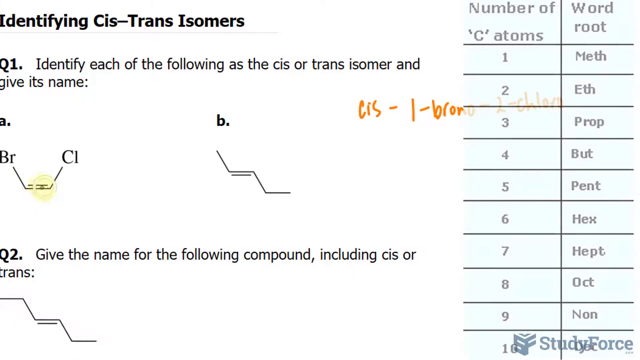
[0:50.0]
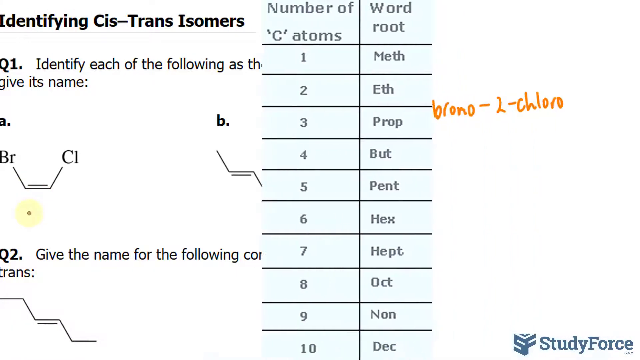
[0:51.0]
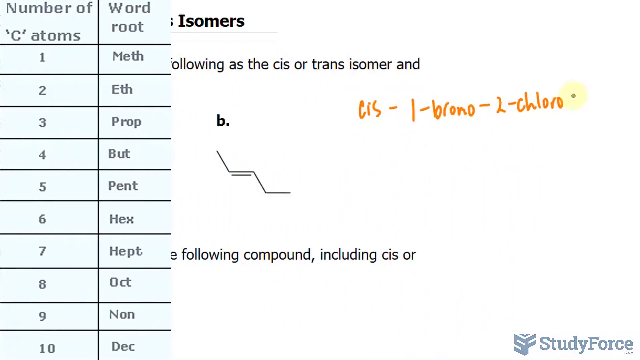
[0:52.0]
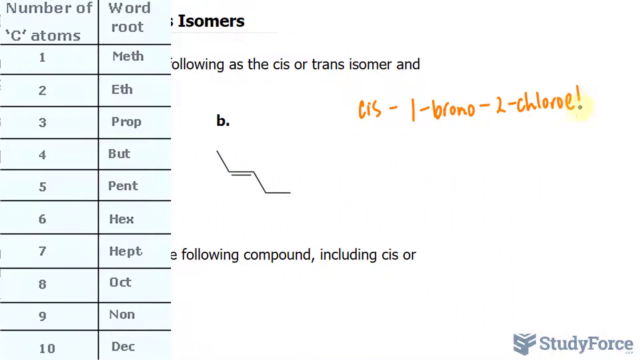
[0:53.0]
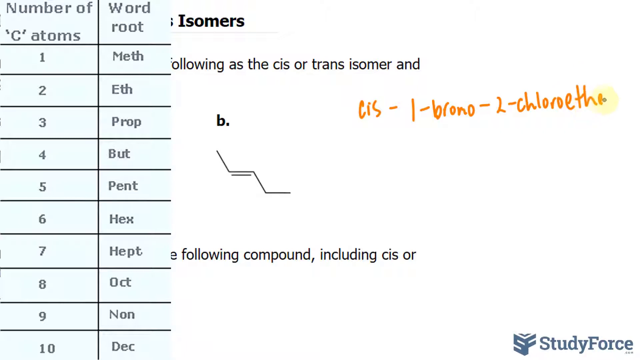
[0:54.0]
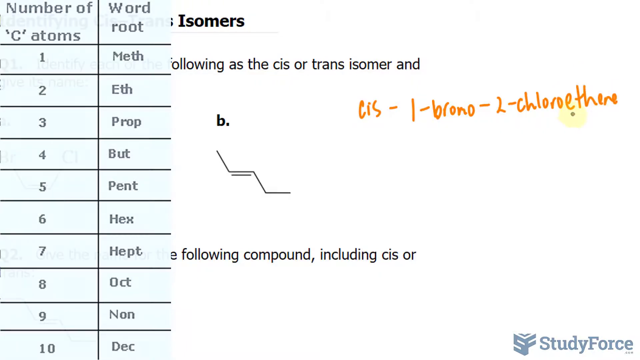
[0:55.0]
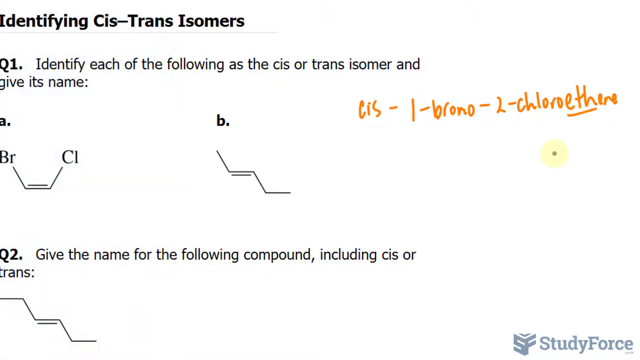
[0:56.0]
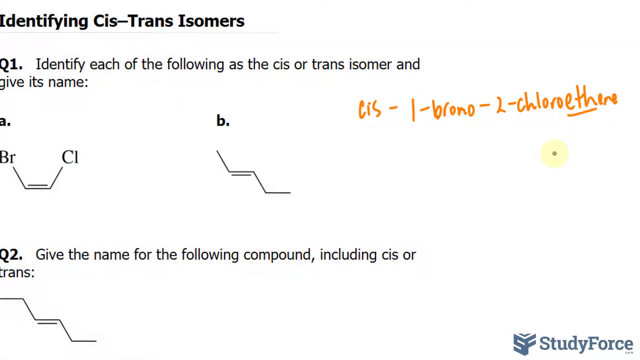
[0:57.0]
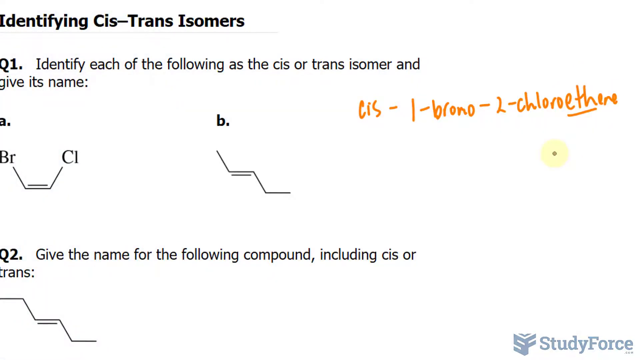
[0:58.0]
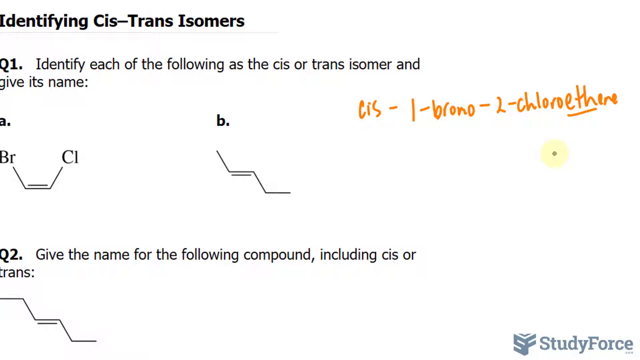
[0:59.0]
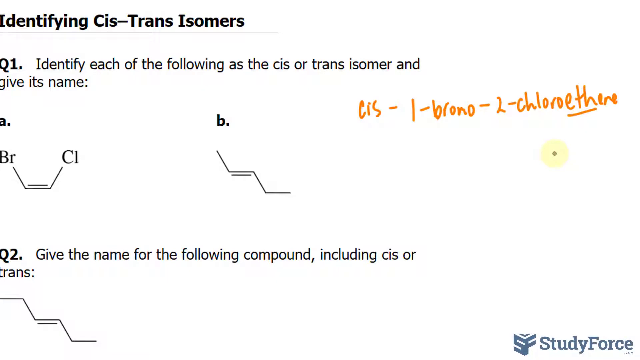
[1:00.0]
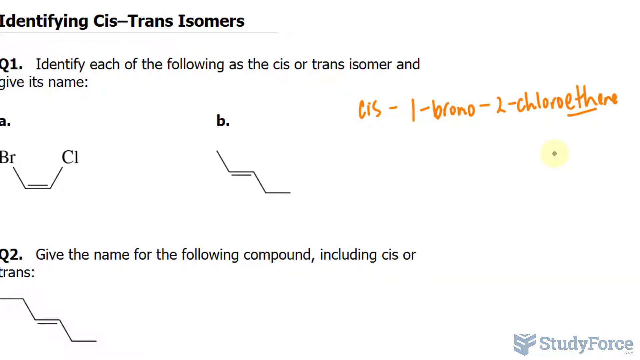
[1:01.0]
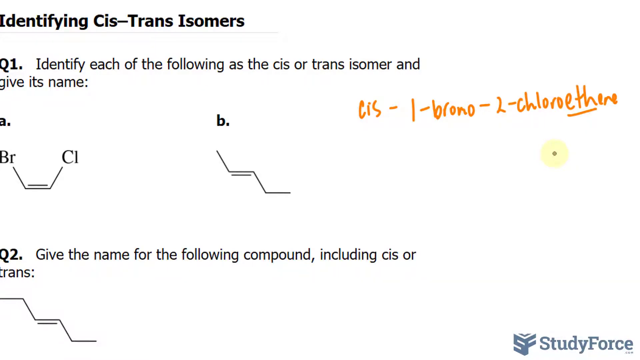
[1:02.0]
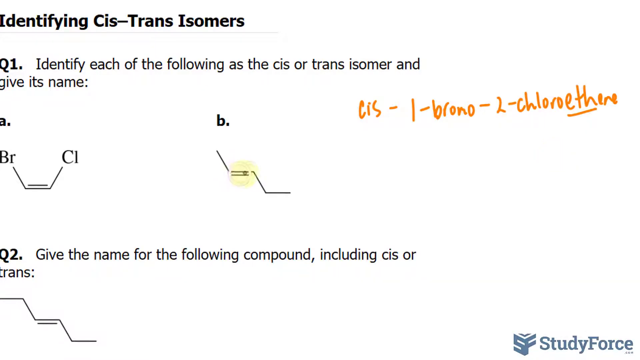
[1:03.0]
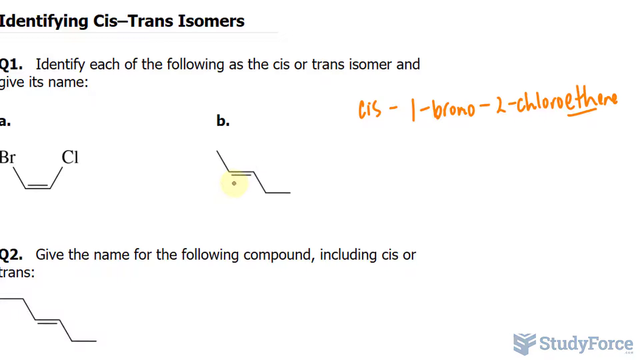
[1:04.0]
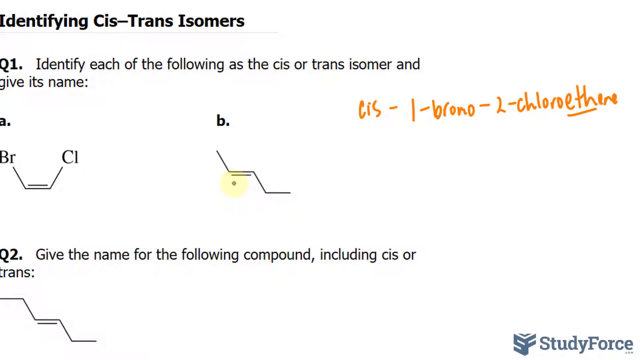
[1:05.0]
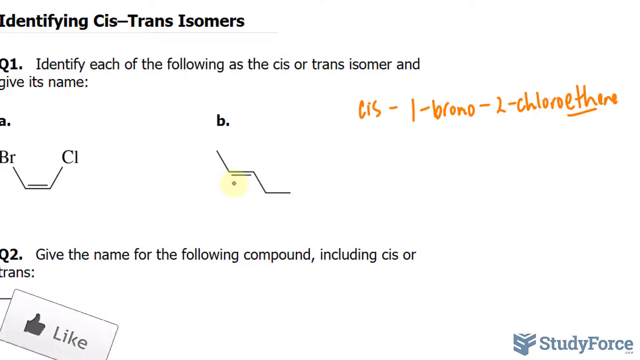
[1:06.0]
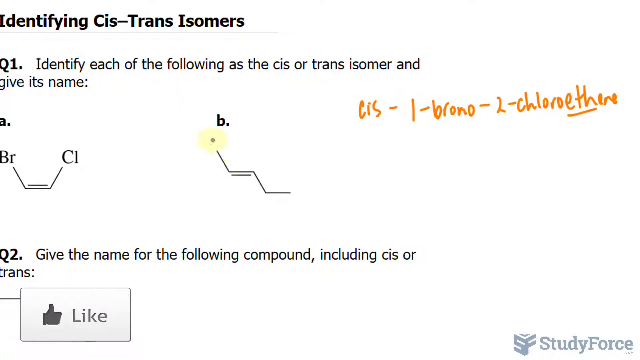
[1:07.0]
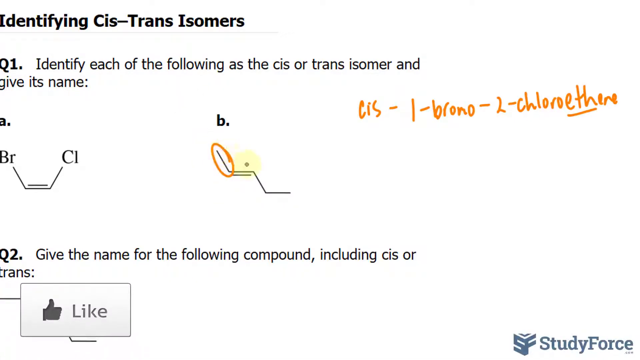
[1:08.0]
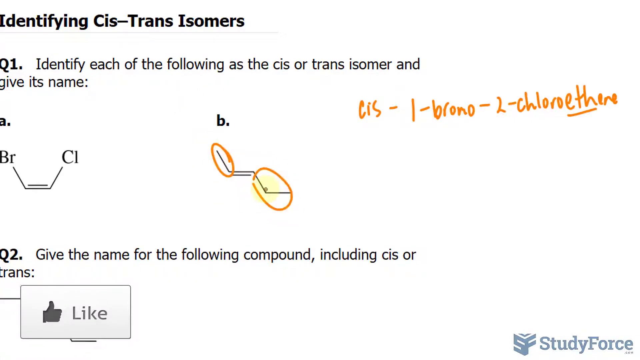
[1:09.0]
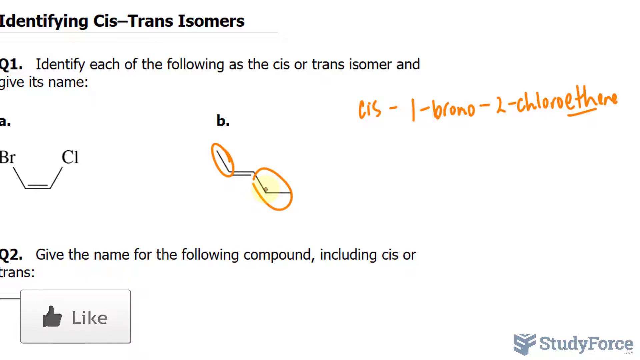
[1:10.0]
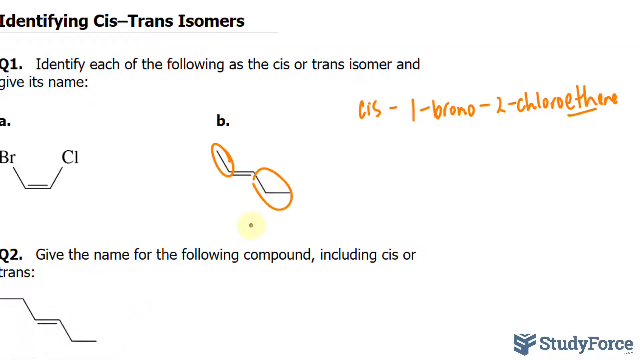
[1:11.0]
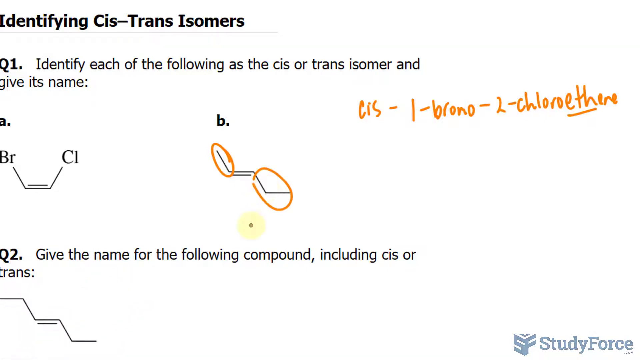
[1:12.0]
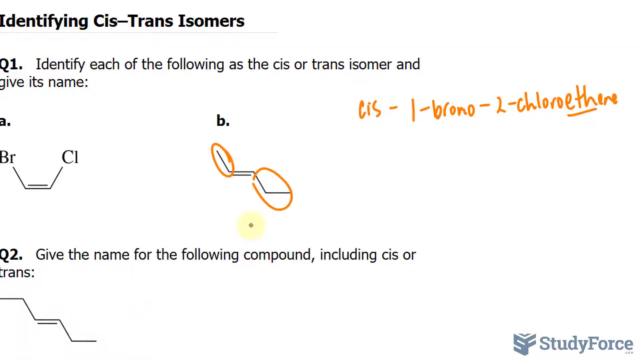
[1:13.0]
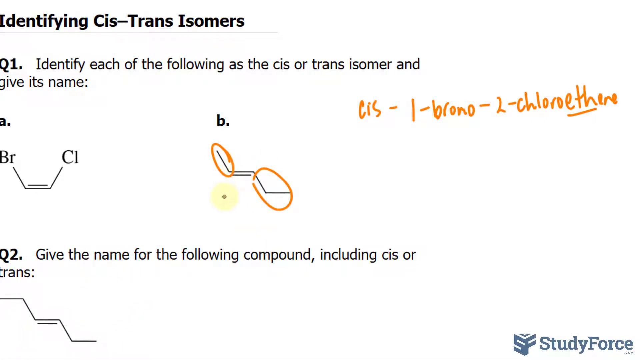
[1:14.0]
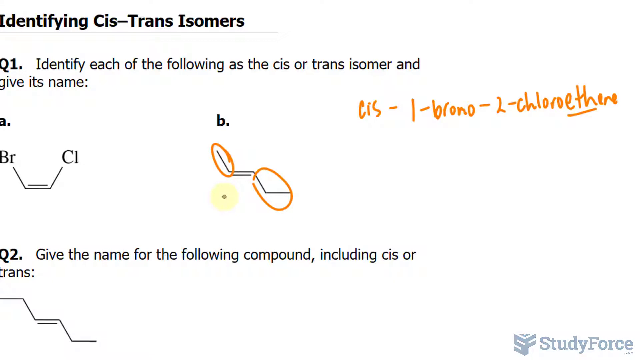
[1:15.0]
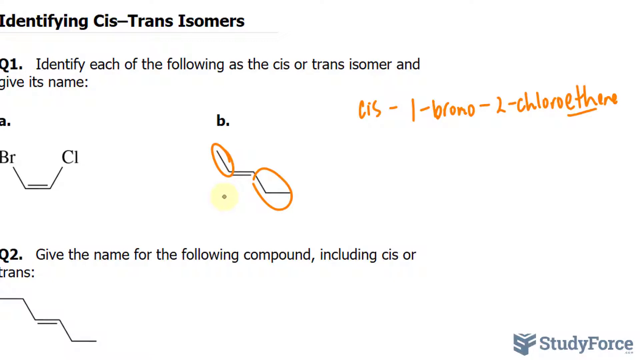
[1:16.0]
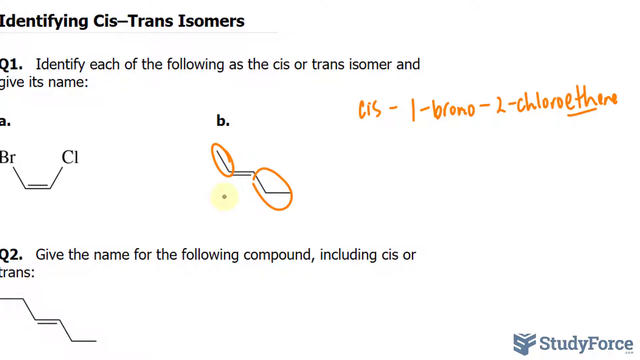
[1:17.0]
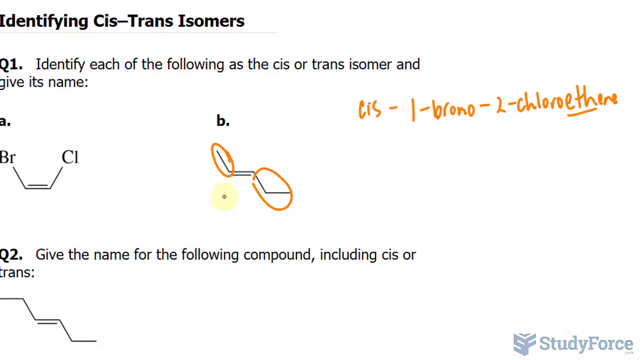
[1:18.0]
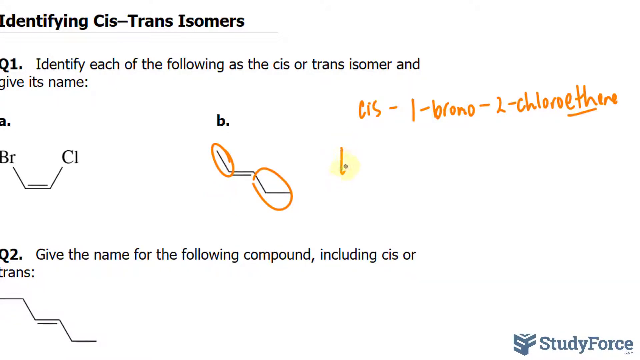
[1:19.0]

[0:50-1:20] In the first seconds, the table, which starts at the right end of the frame, moves slowly until it reaches the opposite end, so after a few moments it is at the left end of the frame. The table has a left portion and a right portion. In the upper right part the number of carbon atoms is indicated, and below it there are boxes with numbers from 1 to 10, while the right part has different denominations corresponding to the roots of different words. Once the table reaches the left end of the frame, it disappears, while the cursor continues writing in orange in the empty white space on the right part of the screen.